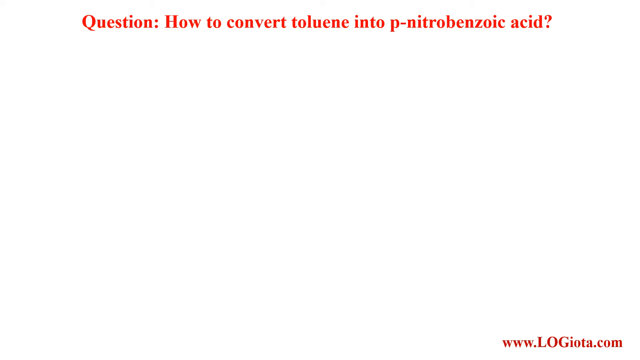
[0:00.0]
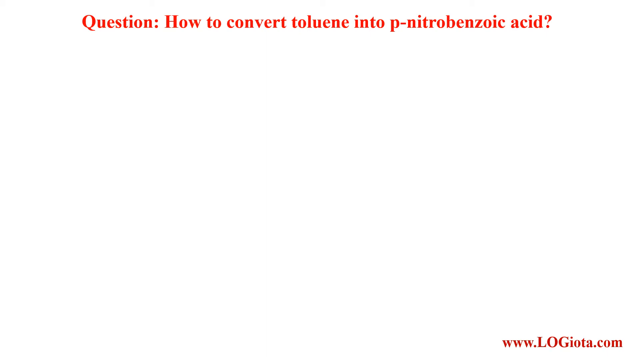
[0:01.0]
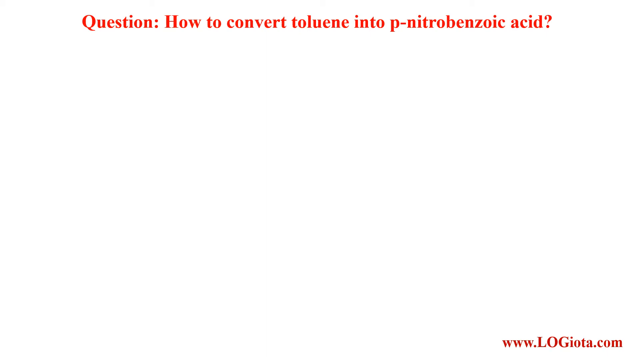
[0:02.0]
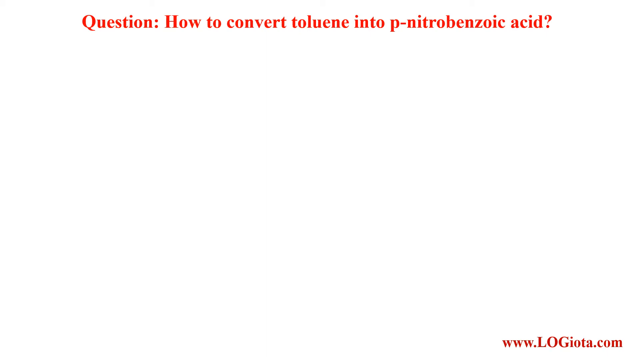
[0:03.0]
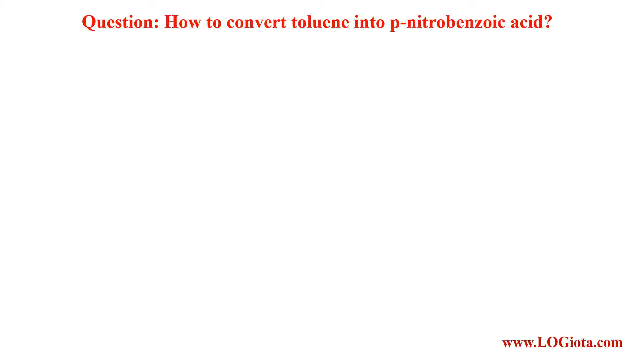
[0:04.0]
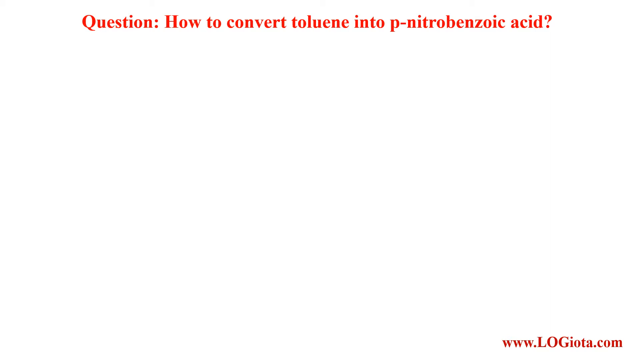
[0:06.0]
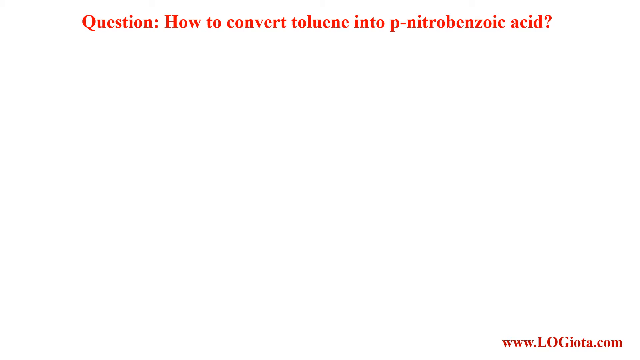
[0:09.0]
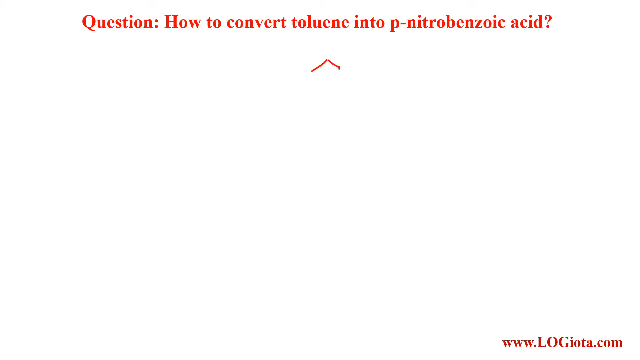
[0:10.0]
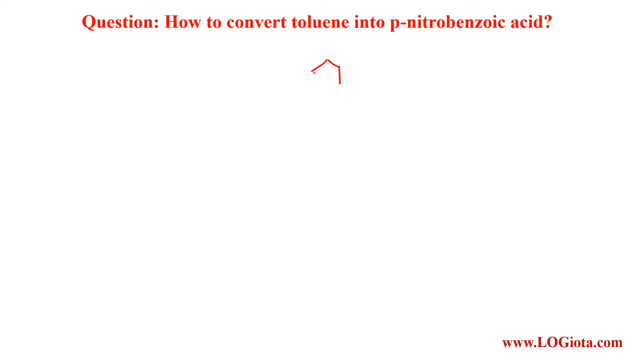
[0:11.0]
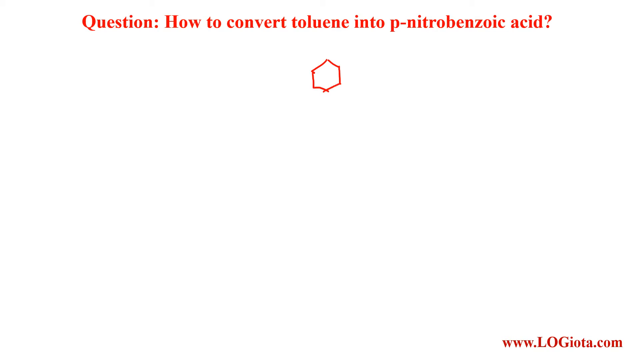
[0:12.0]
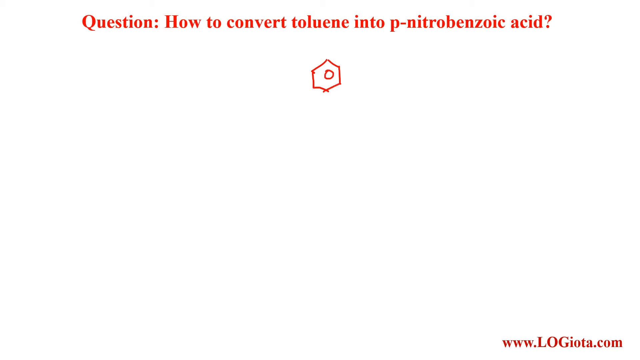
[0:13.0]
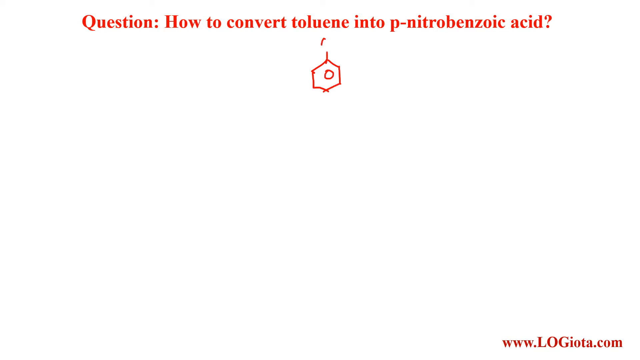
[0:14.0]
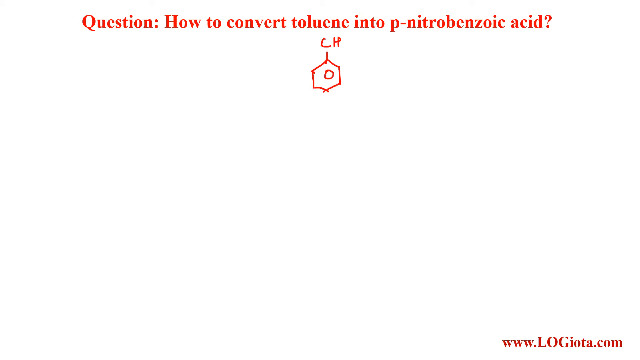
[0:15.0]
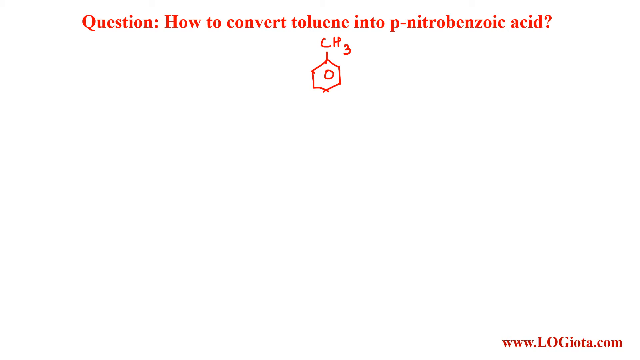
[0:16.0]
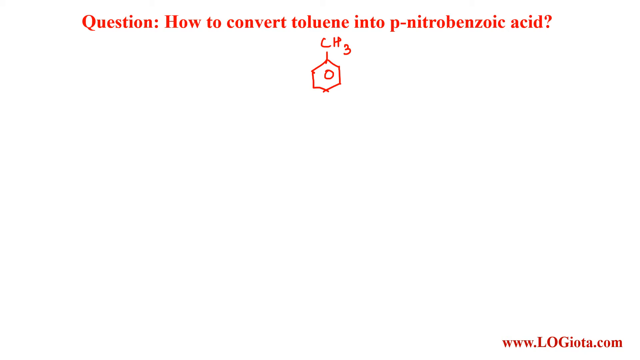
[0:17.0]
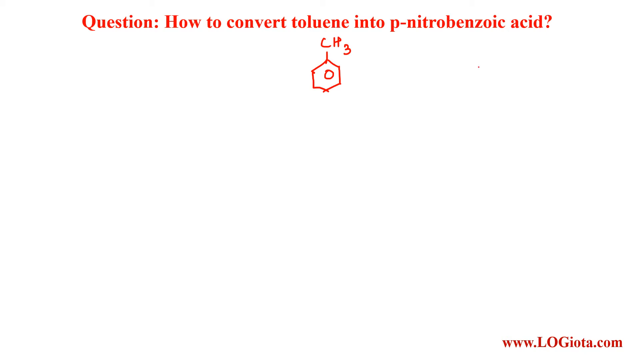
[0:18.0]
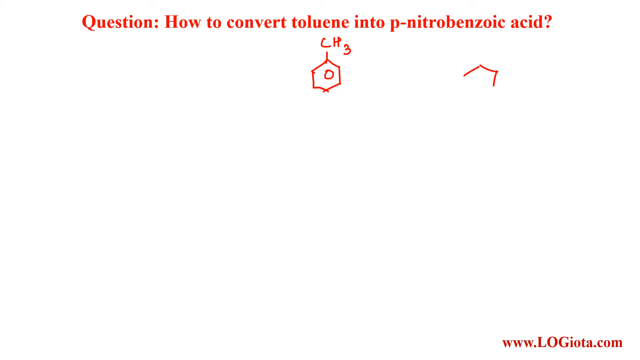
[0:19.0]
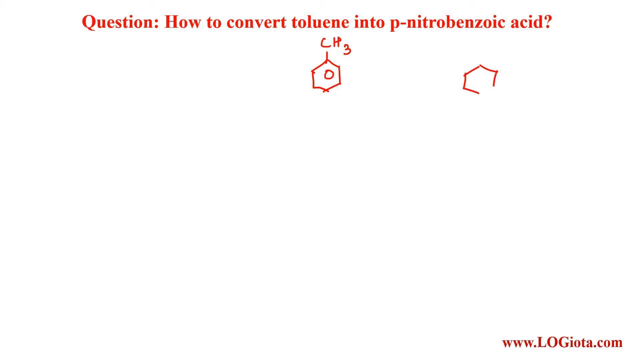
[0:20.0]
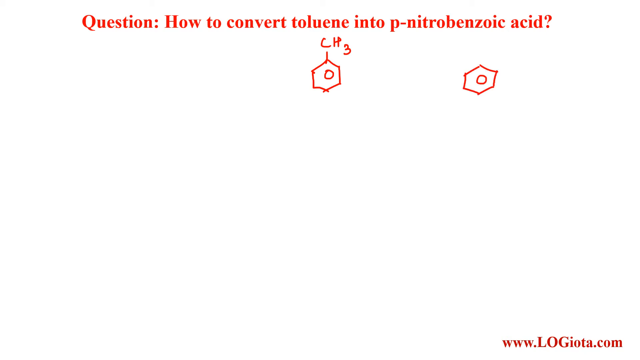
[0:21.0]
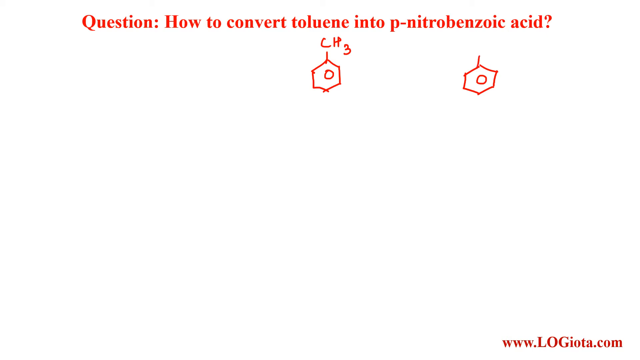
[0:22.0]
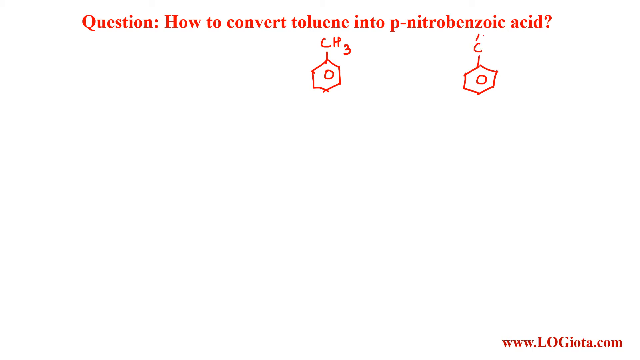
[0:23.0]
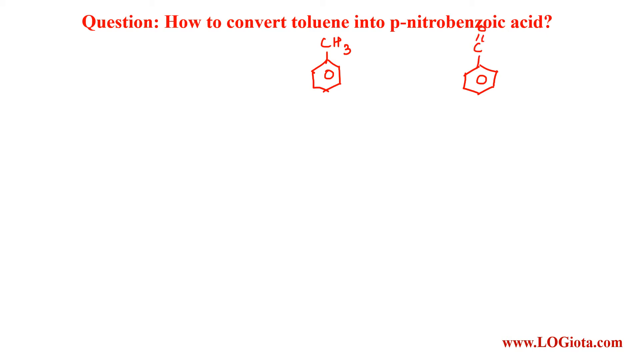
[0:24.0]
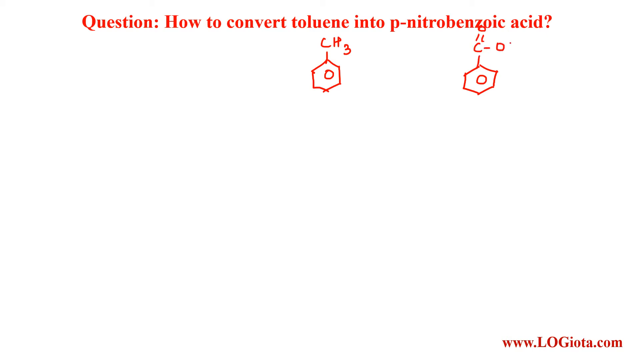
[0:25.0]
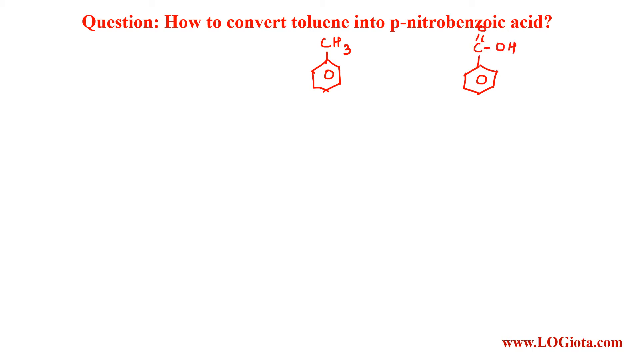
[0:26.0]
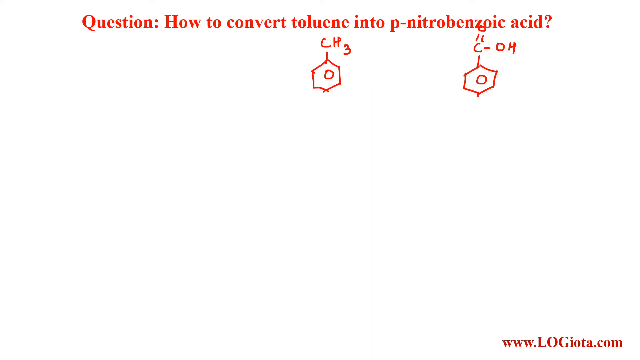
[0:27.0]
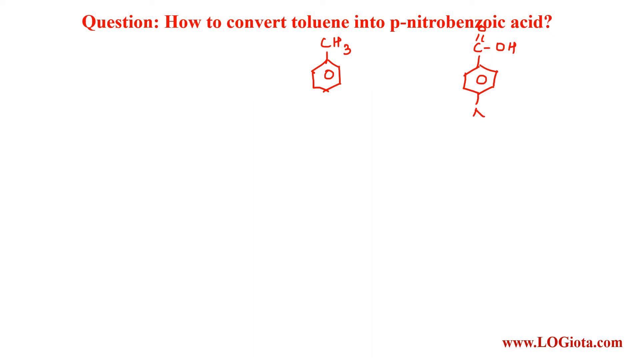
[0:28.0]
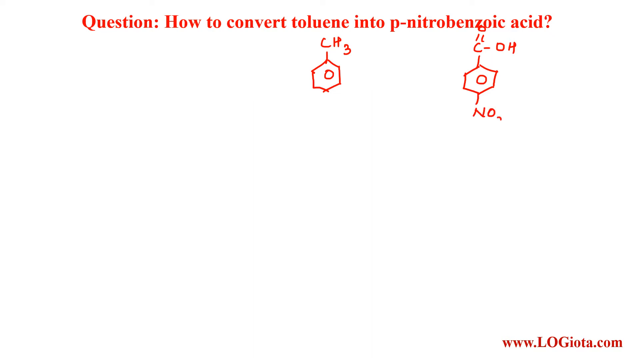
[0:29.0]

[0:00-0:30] The video opens with a question at the top of the page asking "how to convert toluene into P nitrobenzoic acid?", followed by a question mark. At the bottom left- or right-hand side of the screen is a web address, "www.logiota.com". At first nothing moves; there is just the question at the top and a kind of blank white screen. Then, right below the question near the top of the screen, the instructor begins drawing what appears to be the shape of an atom, with something like a nucleus and a chemical bond of sorts. They write "O" in the center and "CH3" at the top. To the right of the screen they start drawing what looks like another atom or molecule, also with an "O" in the middle, then write "C" and "H" with the "H" on top, followed by a hyphen and "OH".